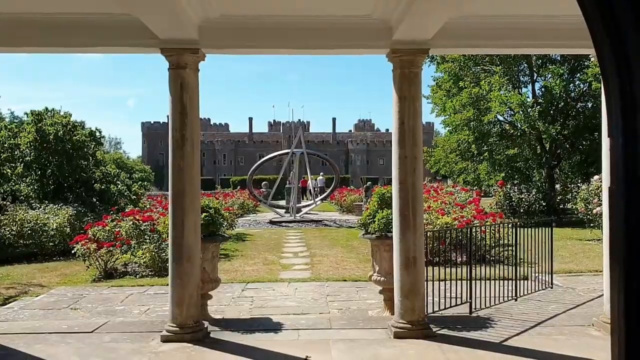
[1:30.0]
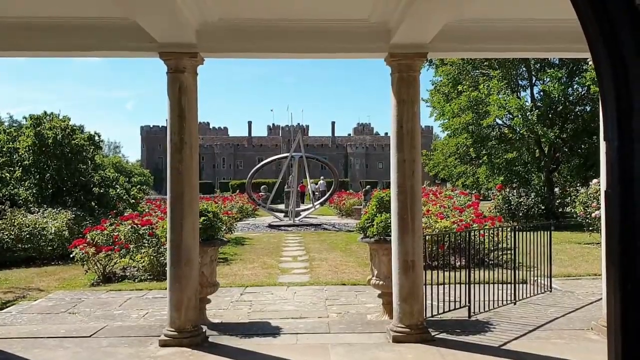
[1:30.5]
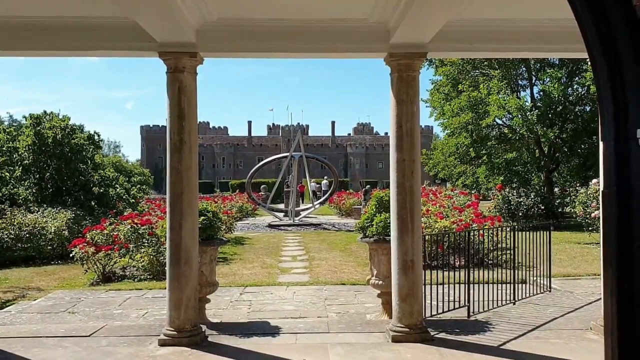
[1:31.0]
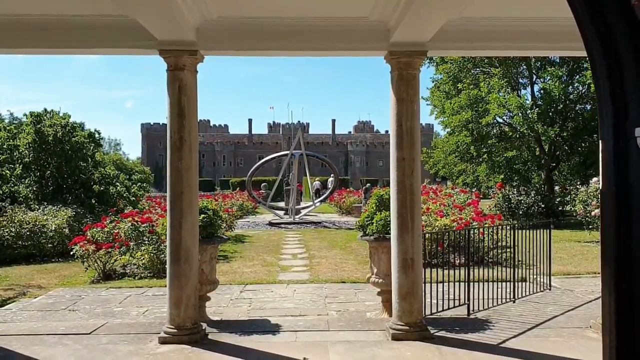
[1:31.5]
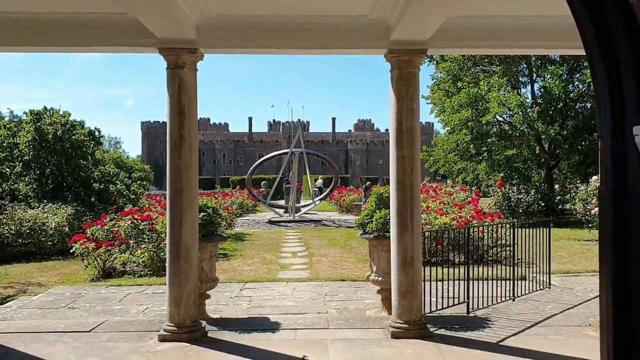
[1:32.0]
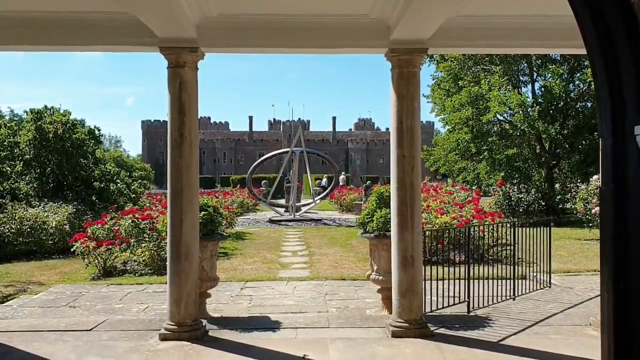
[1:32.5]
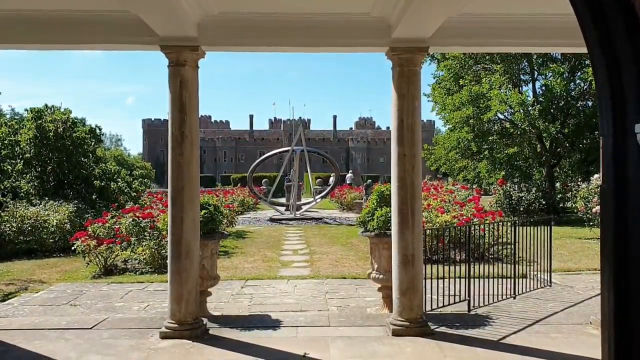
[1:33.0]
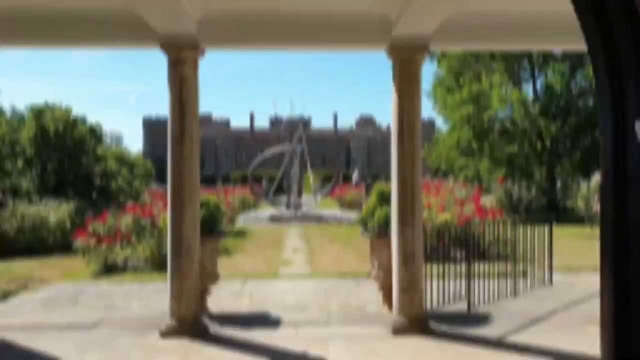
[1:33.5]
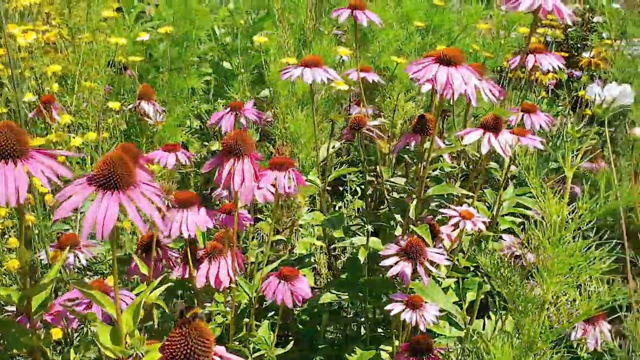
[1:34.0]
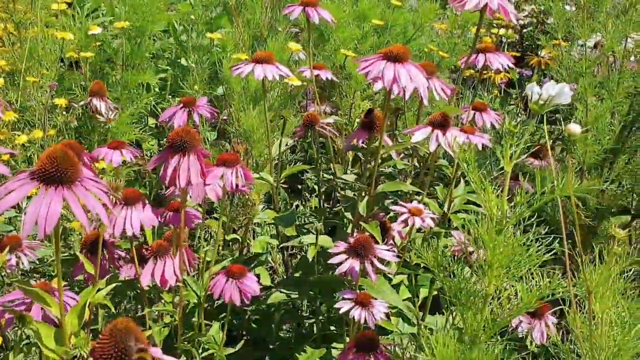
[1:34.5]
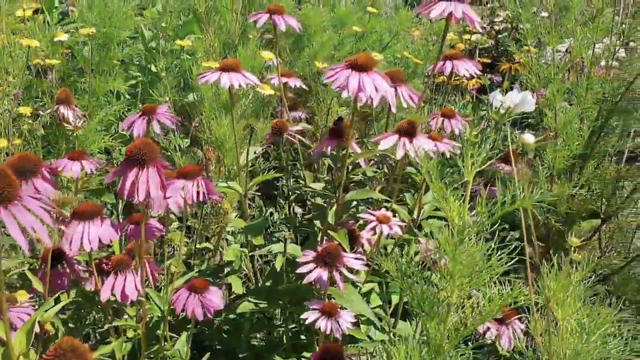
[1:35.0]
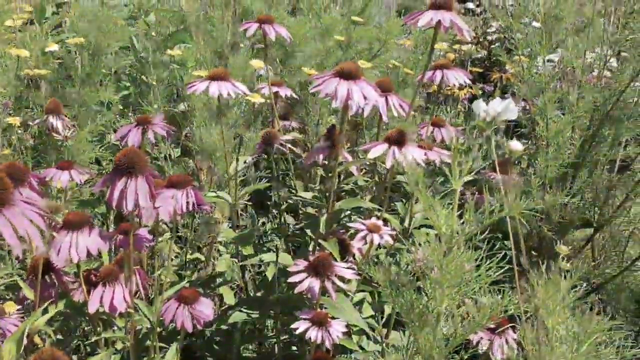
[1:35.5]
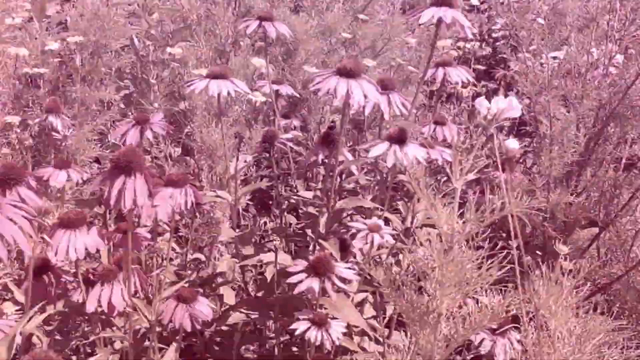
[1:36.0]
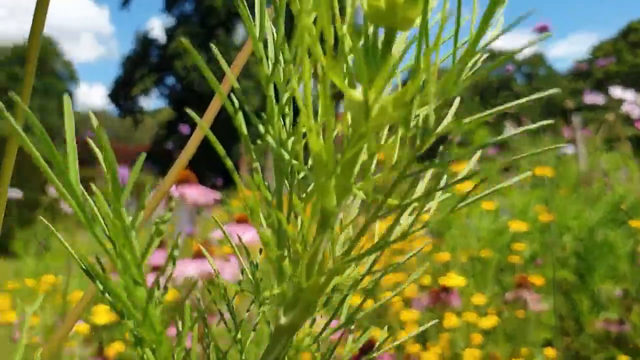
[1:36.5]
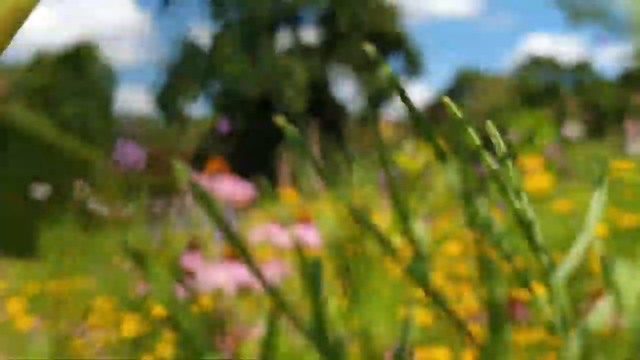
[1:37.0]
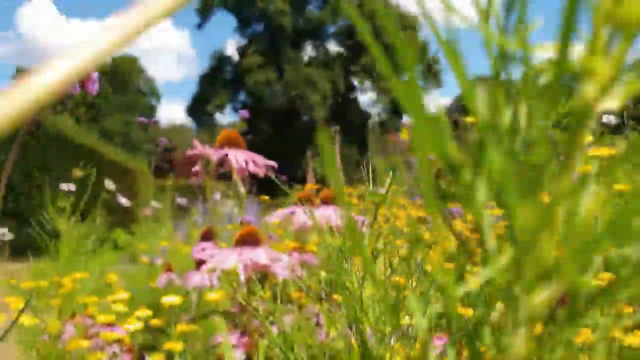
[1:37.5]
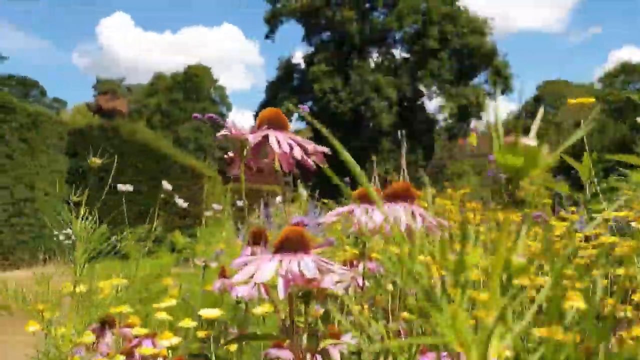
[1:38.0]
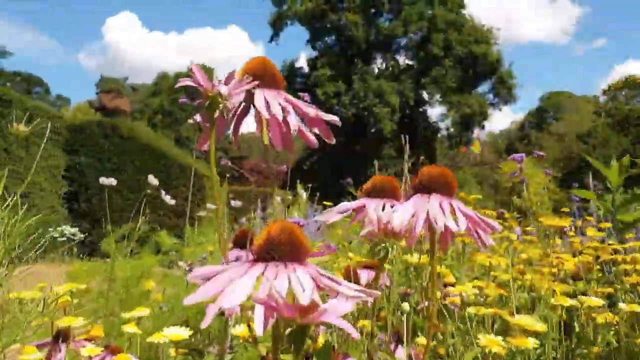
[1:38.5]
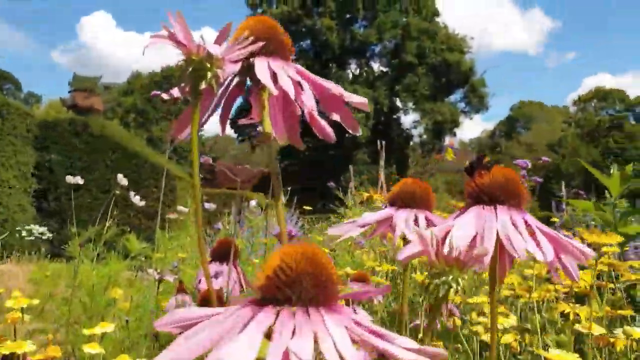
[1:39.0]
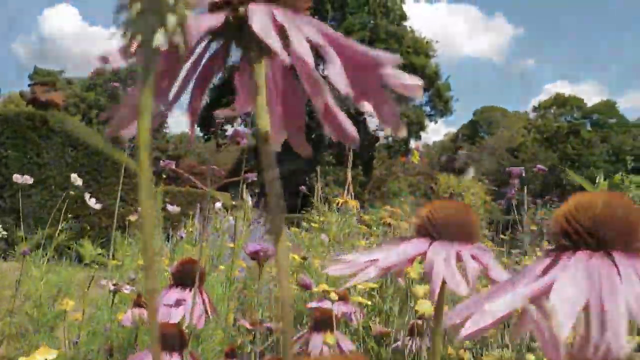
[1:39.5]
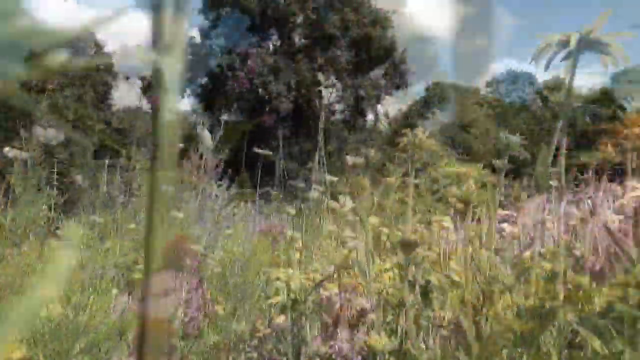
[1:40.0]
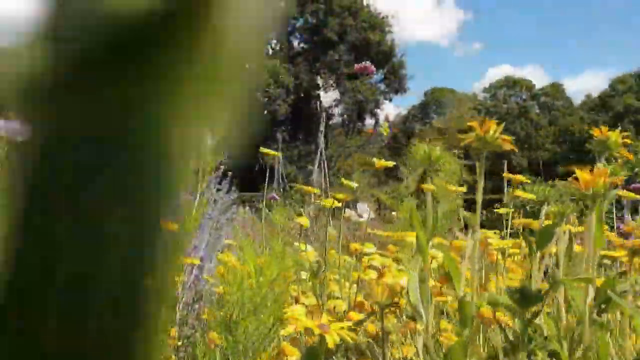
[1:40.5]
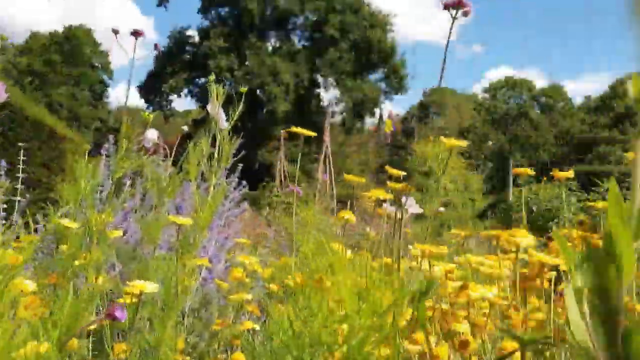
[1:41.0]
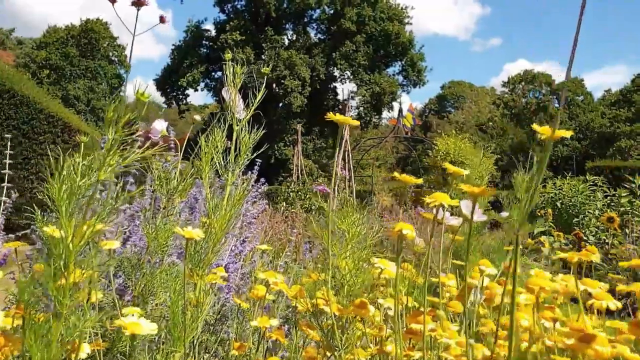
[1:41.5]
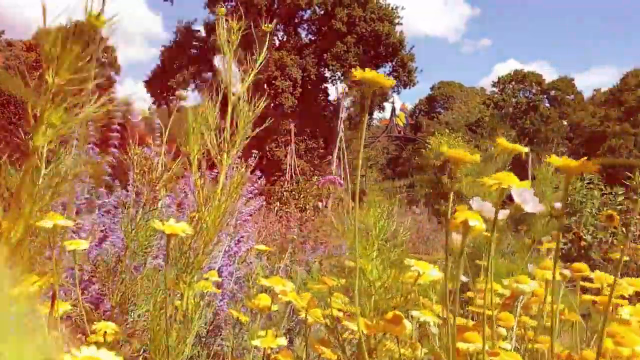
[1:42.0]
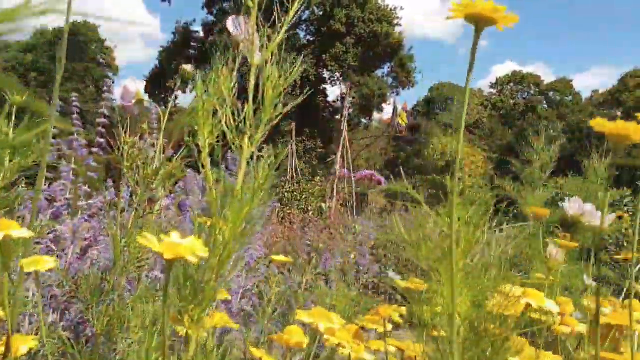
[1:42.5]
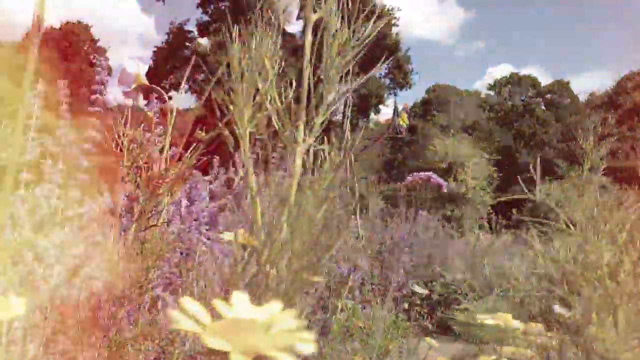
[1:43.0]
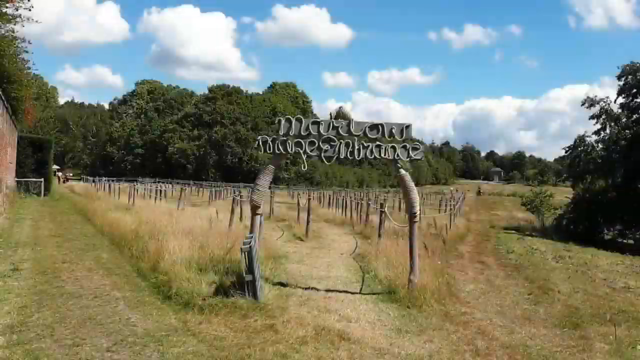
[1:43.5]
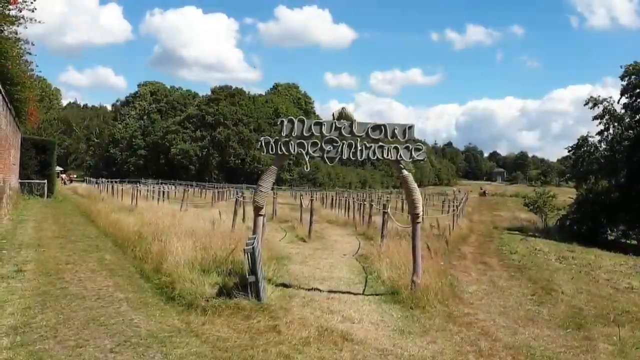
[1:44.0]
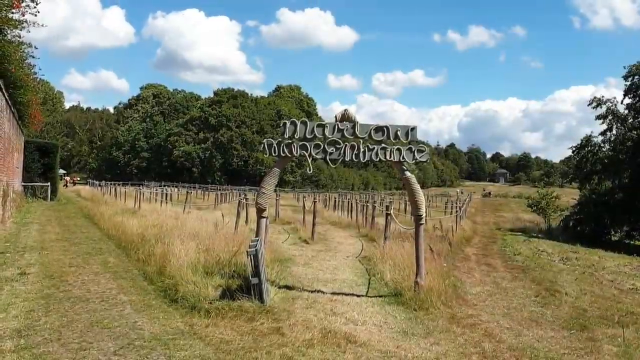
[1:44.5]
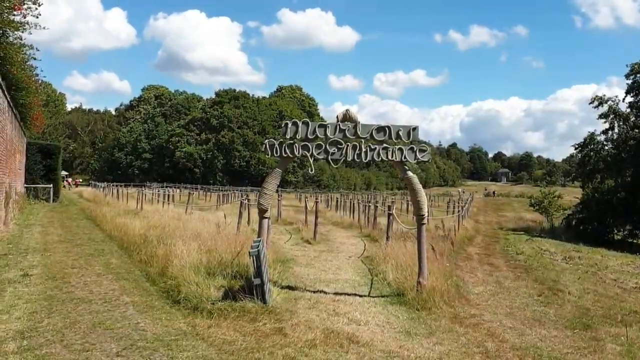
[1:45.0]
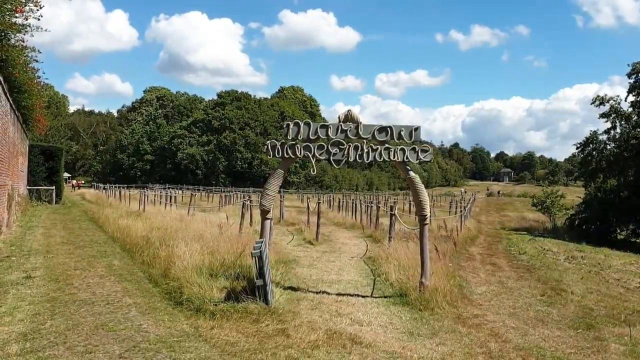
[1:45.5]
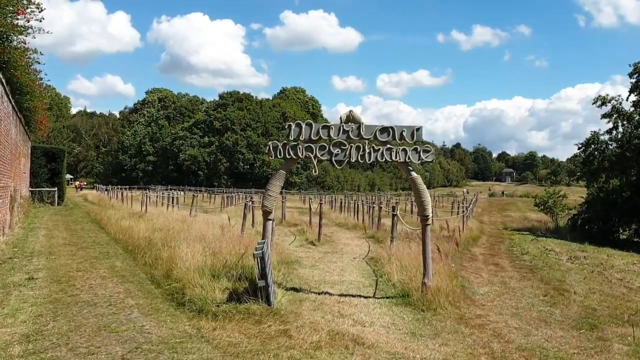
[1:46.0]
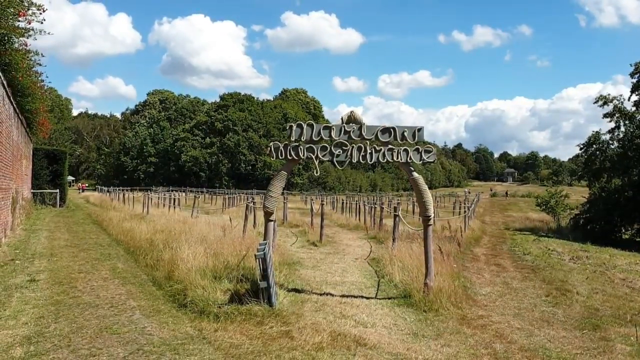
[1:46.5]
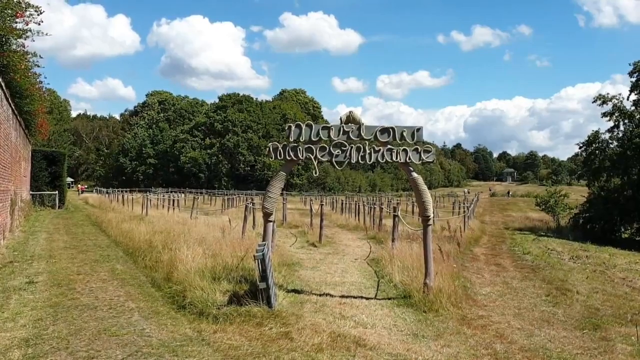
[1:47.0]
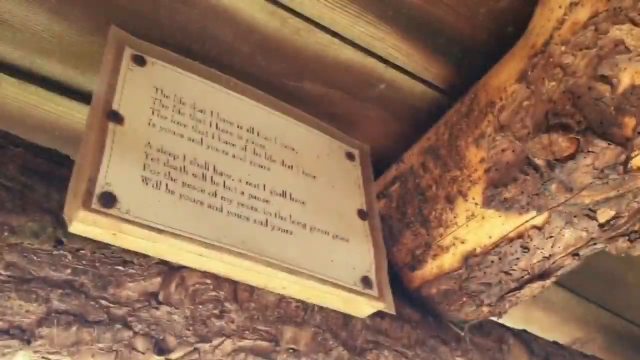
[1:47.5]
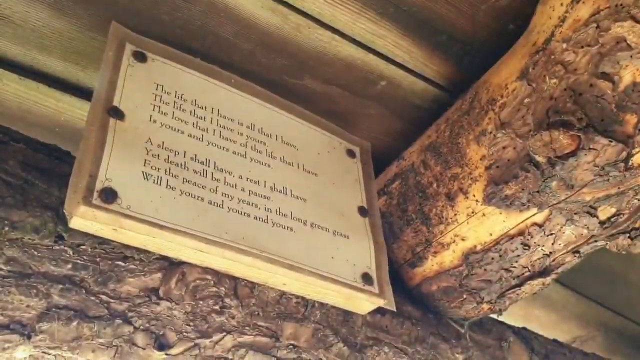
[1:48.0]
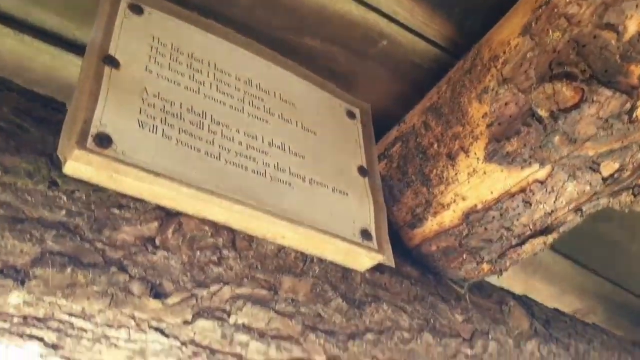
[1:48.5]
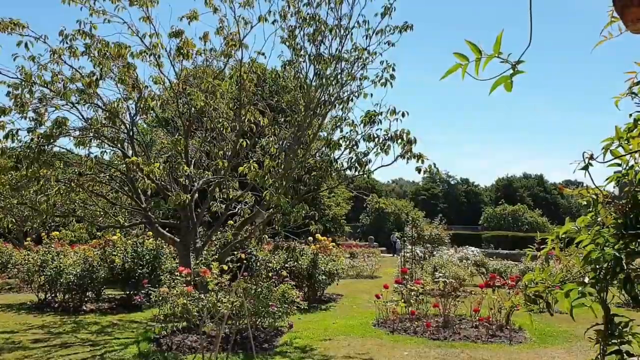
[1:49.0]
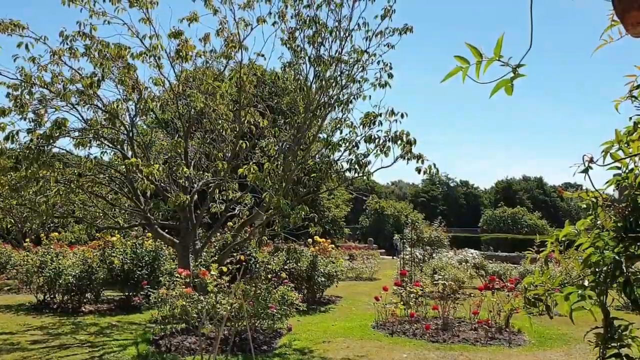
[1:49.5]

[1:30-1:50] Largely the same footage of Herstmonceux Castle, a 15th-century castle in Sussex, England, appears with more detail. Subtitles state that it is unusual, one of the only ones left in England in this brick material. People walk through, possibly different people, and much more of the flower gardens is shown, including a point-of-view shot moving through the flowers at flower level. A poem on a wall and a sort of signpost appear, neither legible. Statues, the suit of armour, roses, blue sky and flags are visible. A further shot shows the castle from a distance through pillars, with a statue or sort of instrument in the garden that is possibly astrological or astronomical.